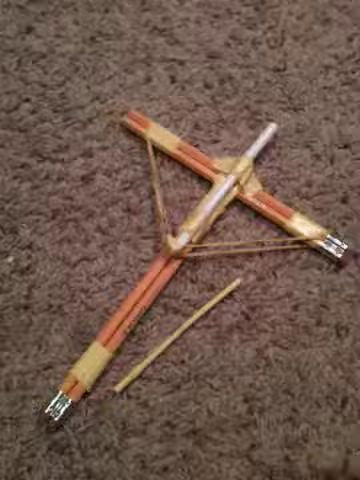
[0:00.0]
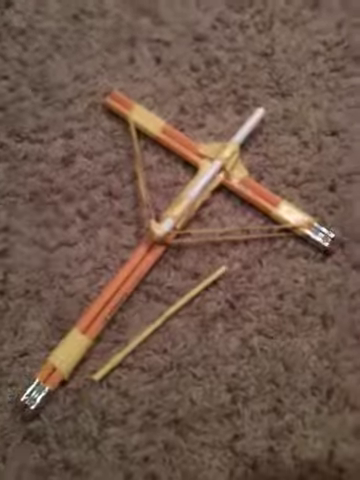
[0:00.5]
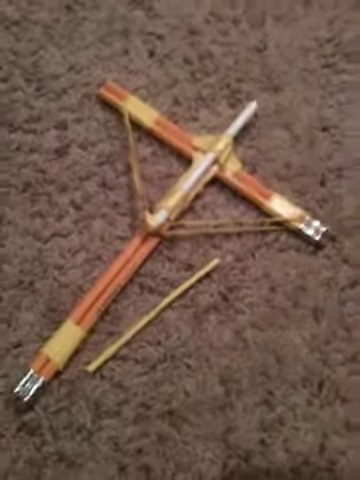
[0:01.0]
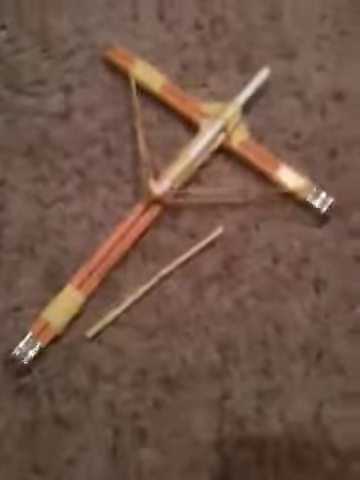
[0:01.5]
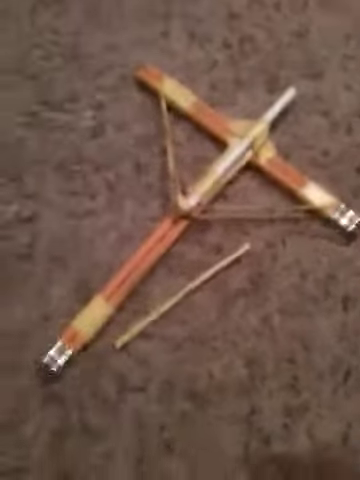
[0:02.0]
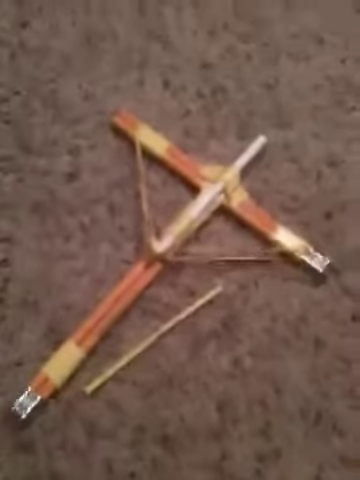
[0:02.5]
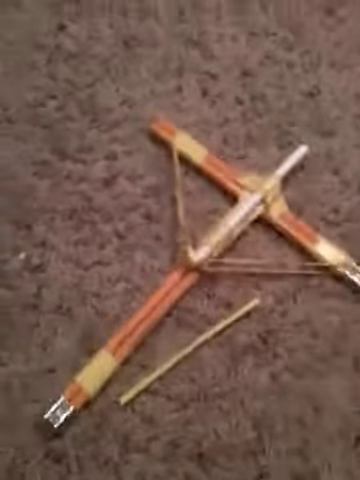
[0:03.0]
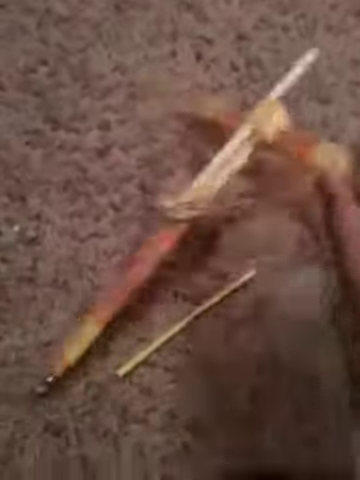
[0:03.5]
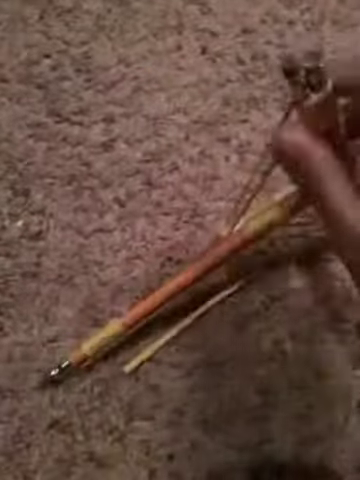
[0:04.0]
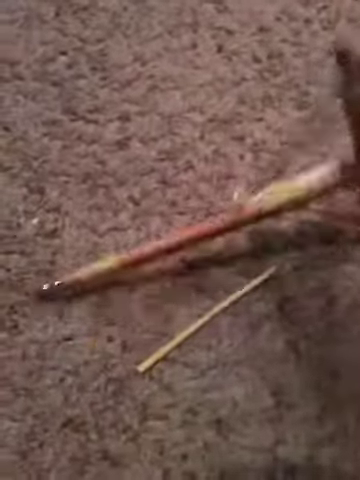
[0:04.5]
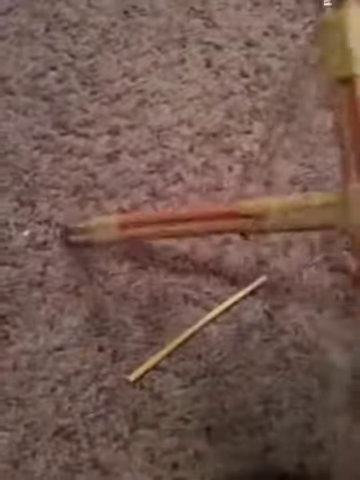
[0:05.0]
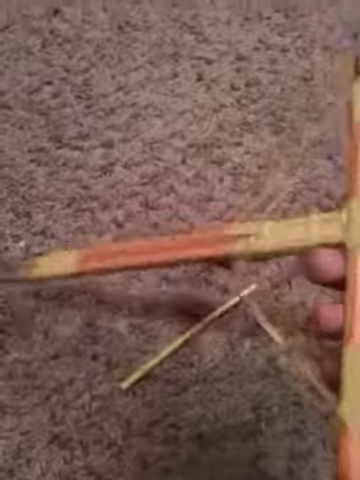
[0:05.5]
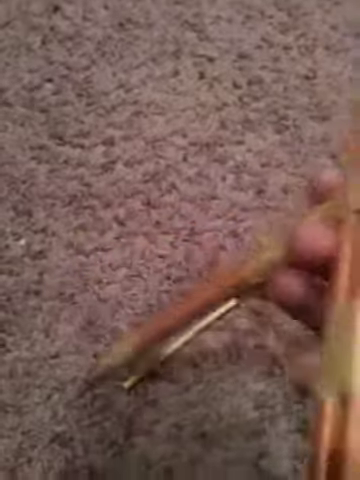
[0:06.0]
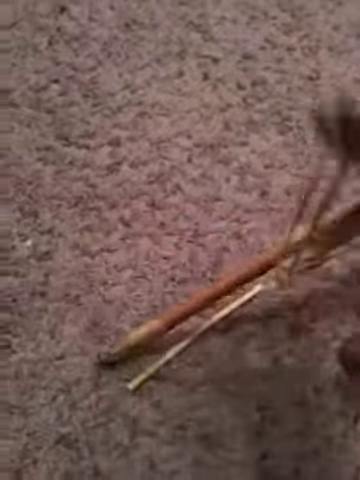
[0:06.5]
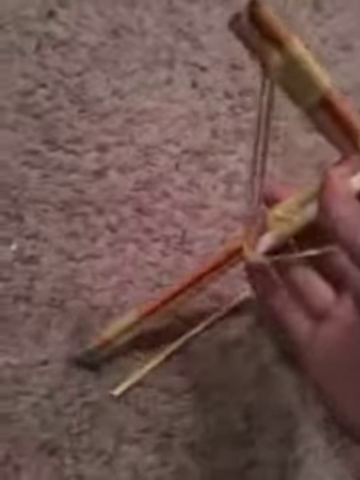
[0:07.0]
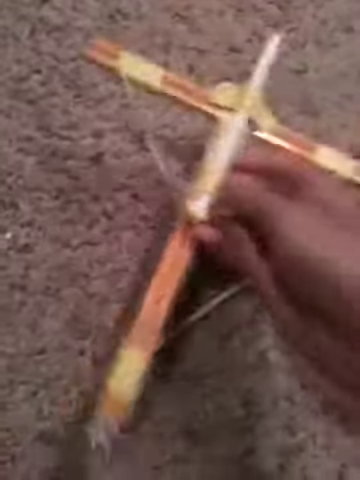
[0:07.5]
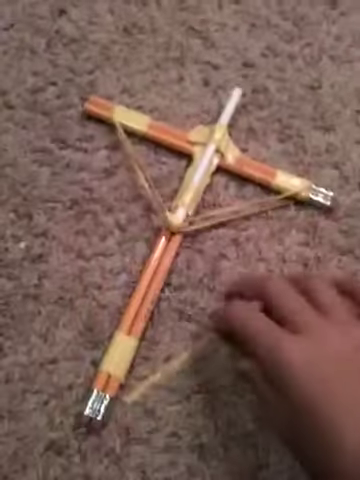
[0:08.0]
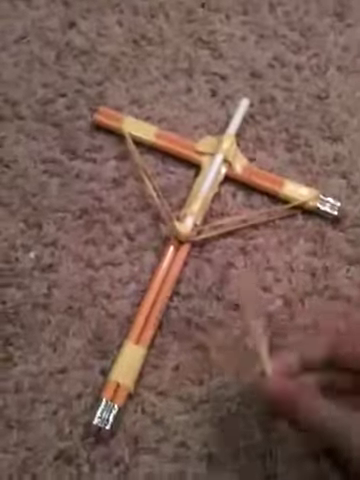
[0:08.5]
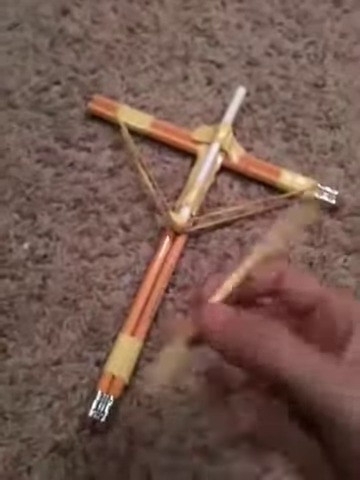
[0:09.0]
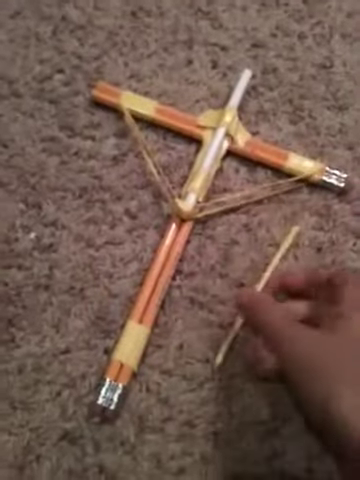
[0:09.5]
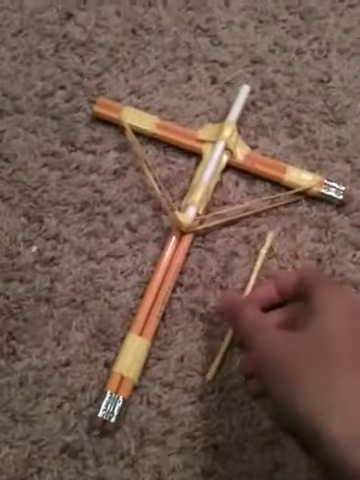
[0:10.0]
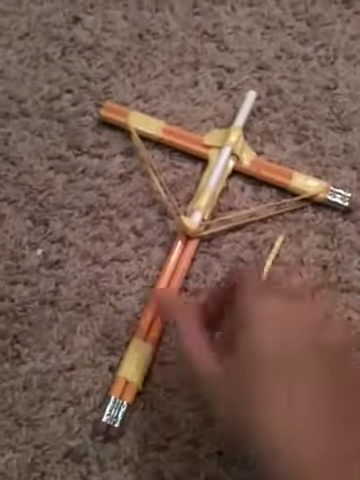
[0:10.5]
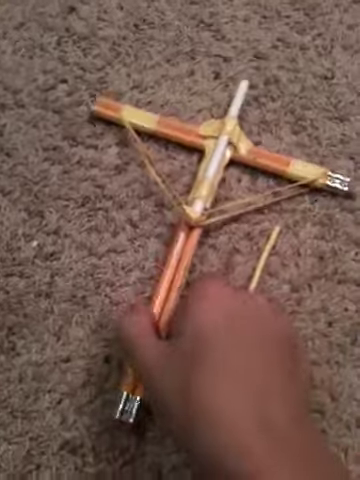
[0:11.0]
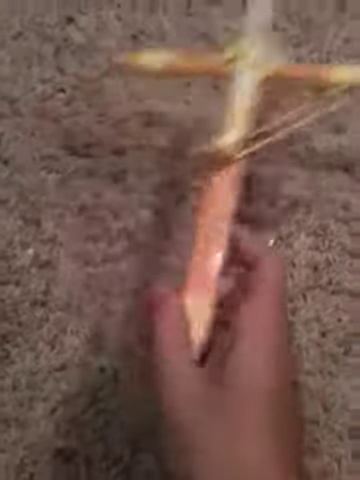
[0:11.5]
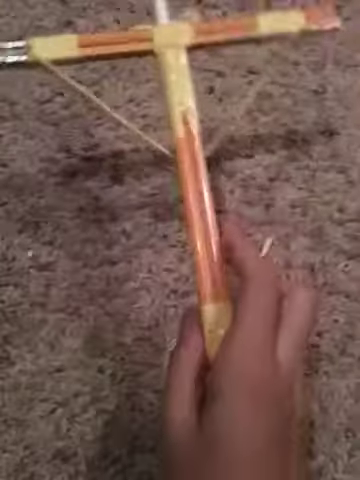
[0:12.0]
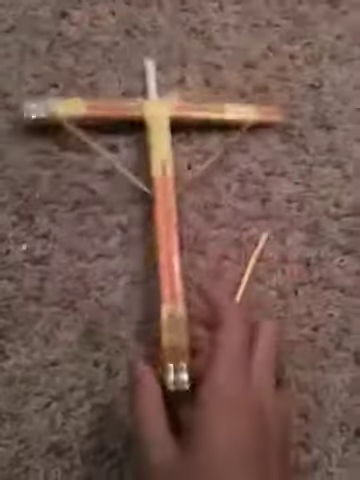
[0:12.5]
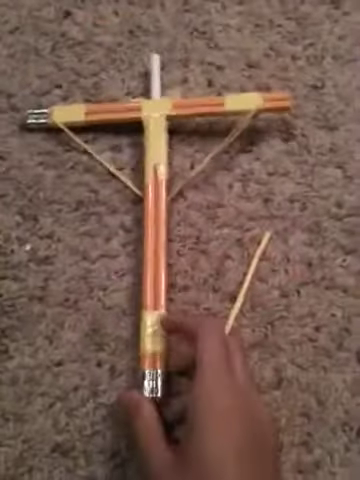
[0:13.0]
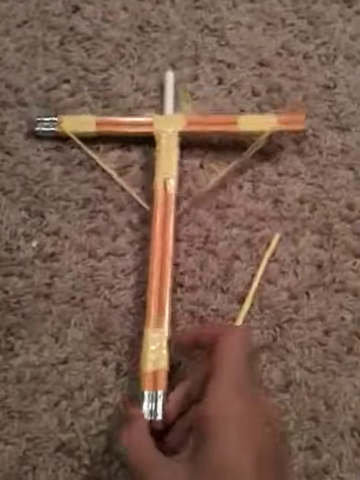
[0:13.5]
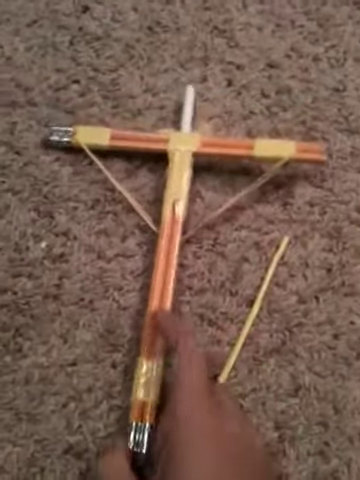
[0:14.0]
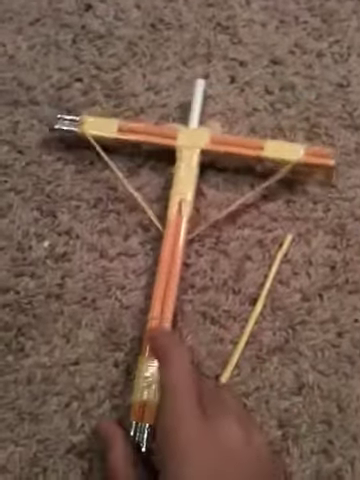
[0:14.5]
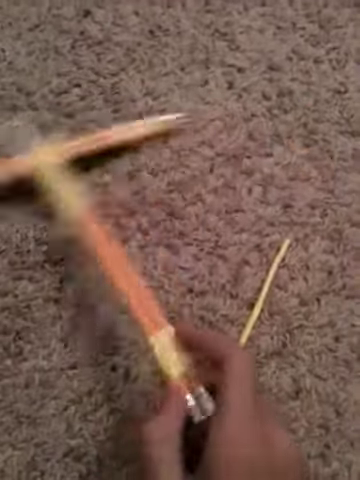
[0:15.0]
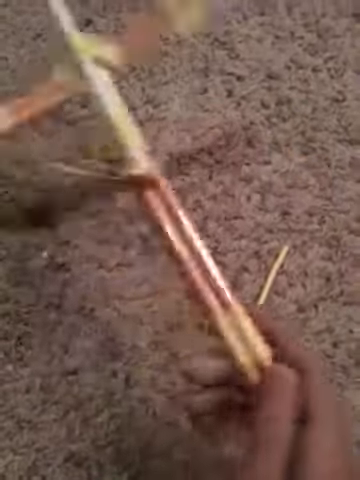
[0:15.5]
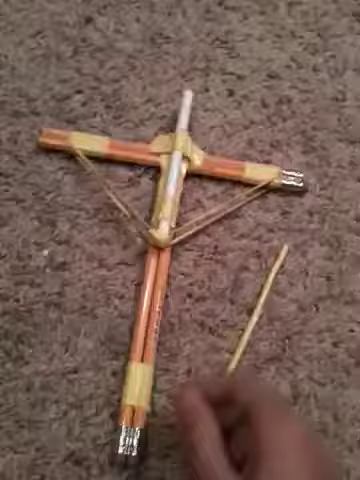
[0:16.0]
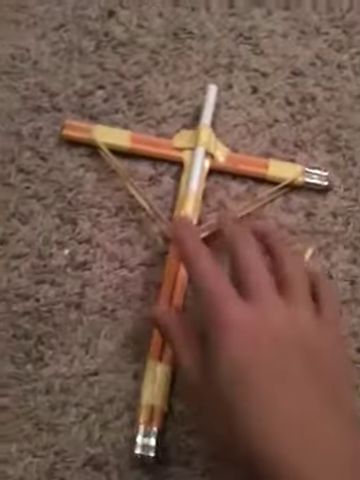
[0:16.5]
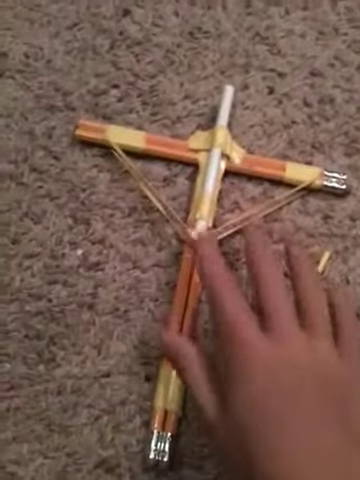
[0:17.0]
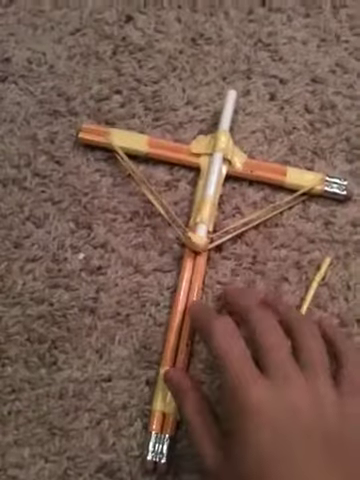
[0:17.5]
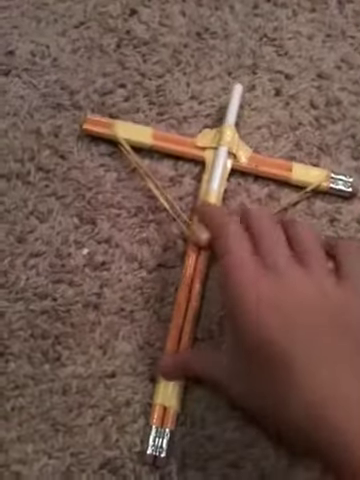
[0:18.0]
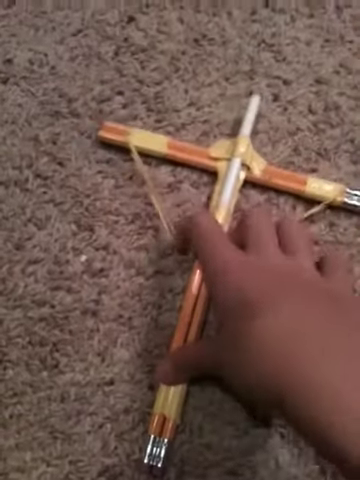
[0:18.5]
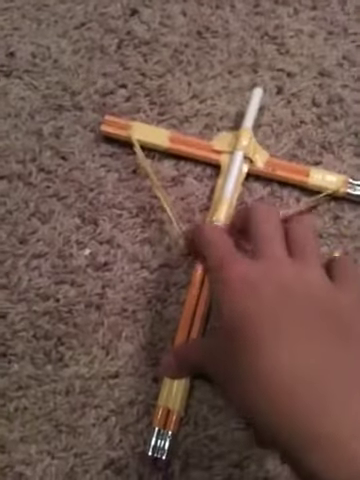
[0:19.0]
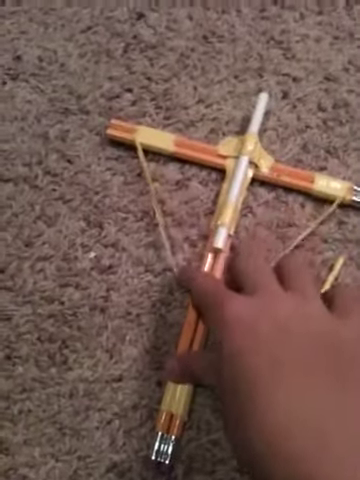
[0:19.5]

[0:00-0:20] Four pencils are paired together, two of them crossed to form the shape of a crucifix. The pencils are full length and unsharpened, with a silver band on one end and a pink eraser on that same end. The pencil contraption is laying on a light brown carpet, and the video is low-resolution and grainy. Next to the device is a long piece of wood in the shape of a skewer. A hand appears, picks up the pencil contraption, spins it over 360 degrees and lays it back down, then picks up the wooden skewer and drops it. It picks up the pencil device again, flips it 360 degrees over its axis and lays it back onto the ground. There appears to be an elastic band attached to the device; the right hand pulls back the elastic and attempts to release it, looking as if it would fire another pencil from the device in the manner of a crossbow.